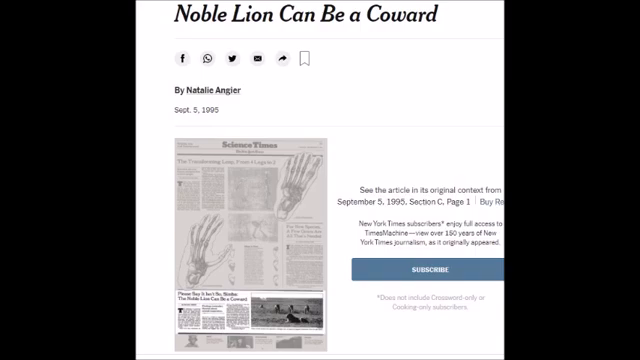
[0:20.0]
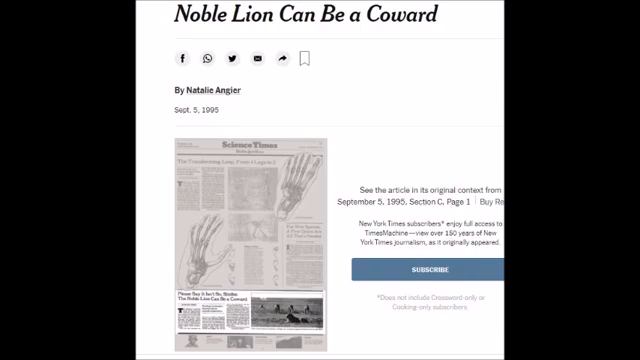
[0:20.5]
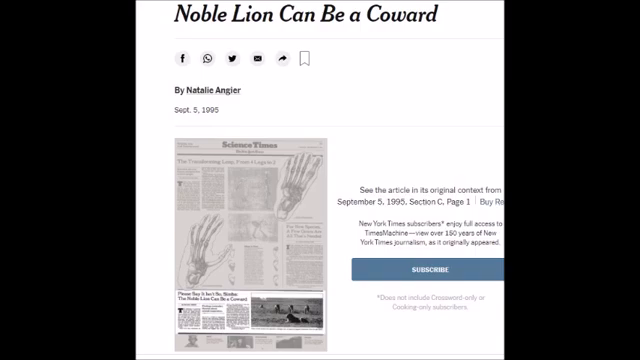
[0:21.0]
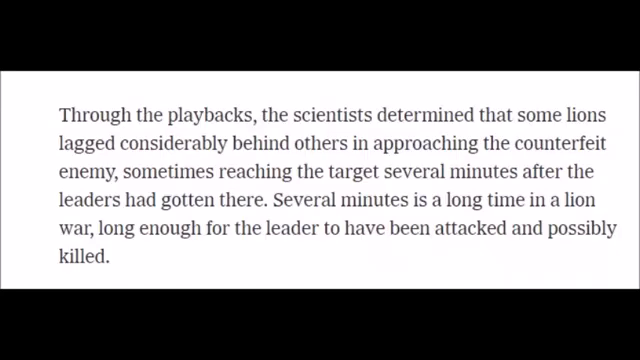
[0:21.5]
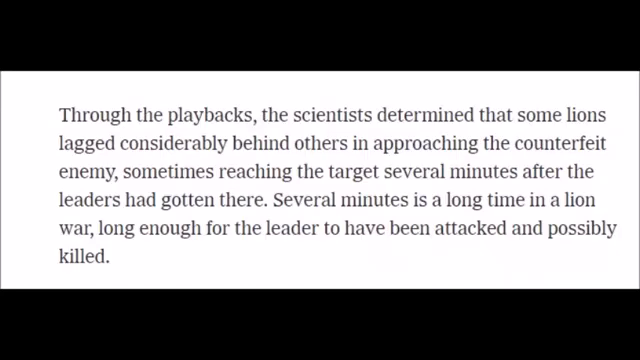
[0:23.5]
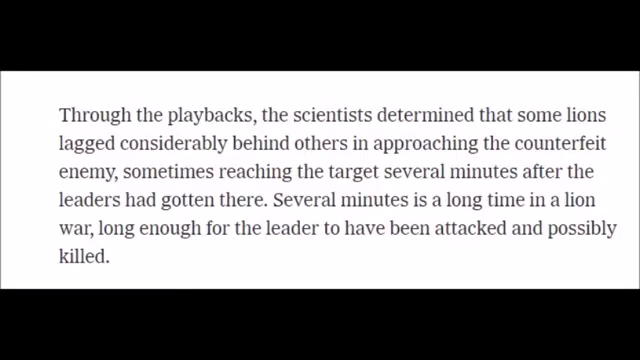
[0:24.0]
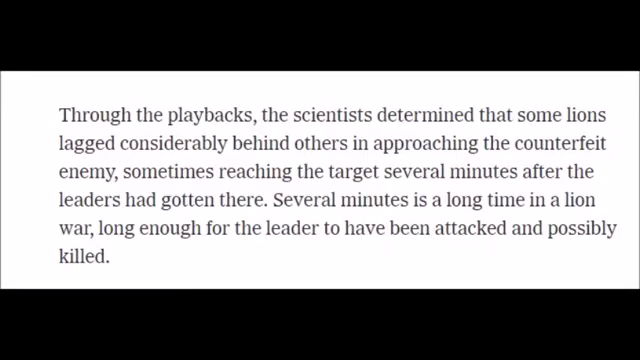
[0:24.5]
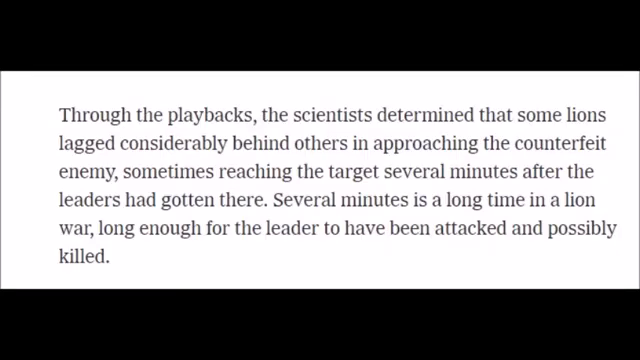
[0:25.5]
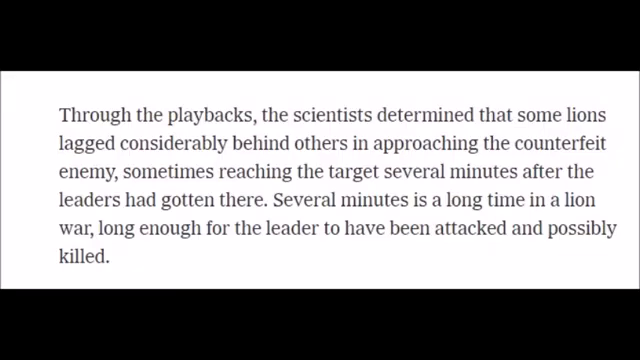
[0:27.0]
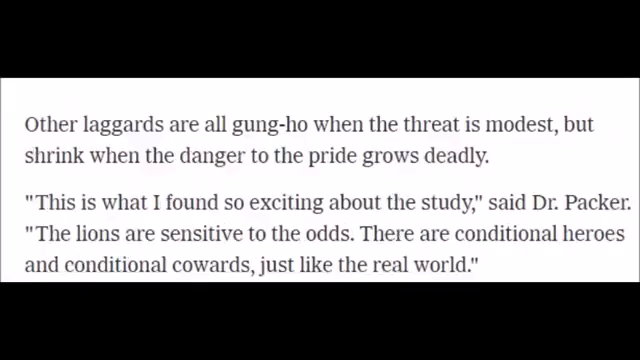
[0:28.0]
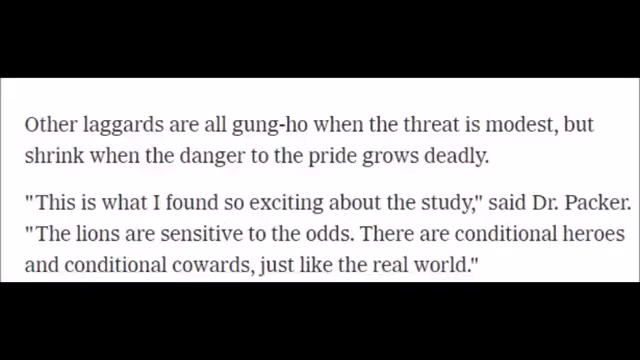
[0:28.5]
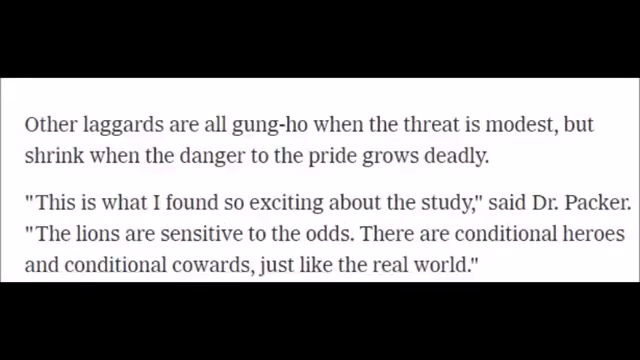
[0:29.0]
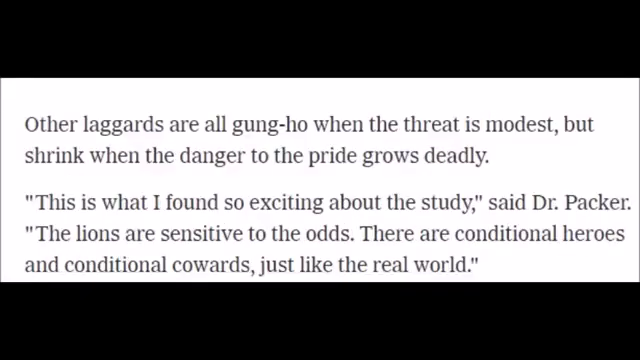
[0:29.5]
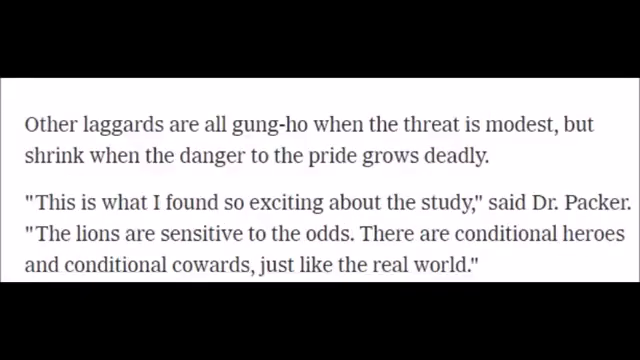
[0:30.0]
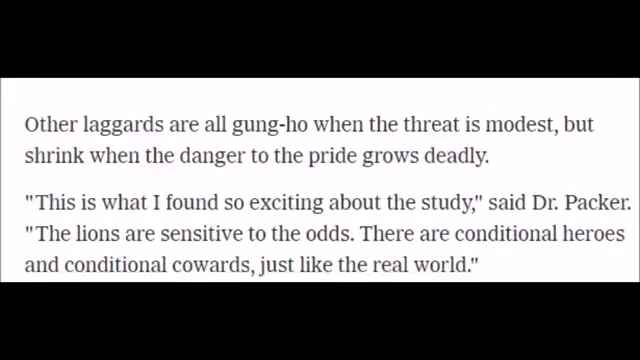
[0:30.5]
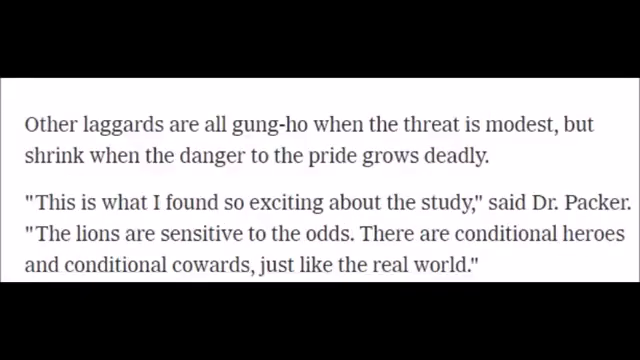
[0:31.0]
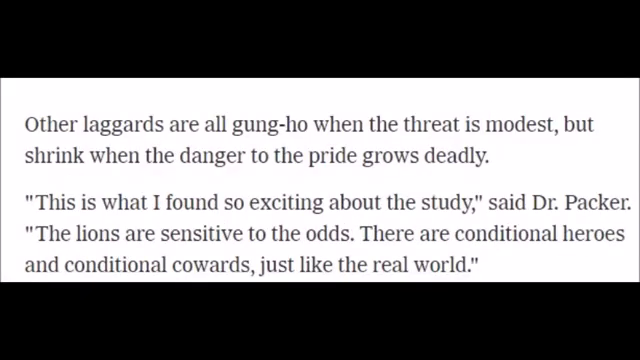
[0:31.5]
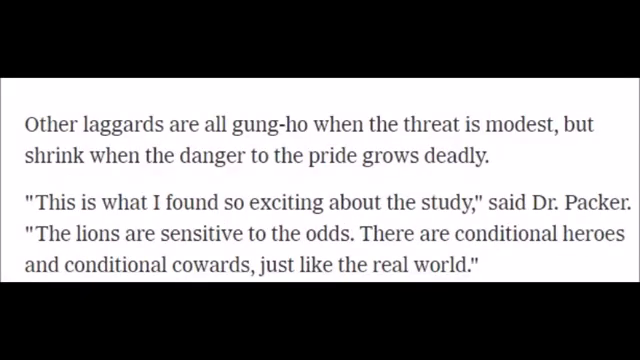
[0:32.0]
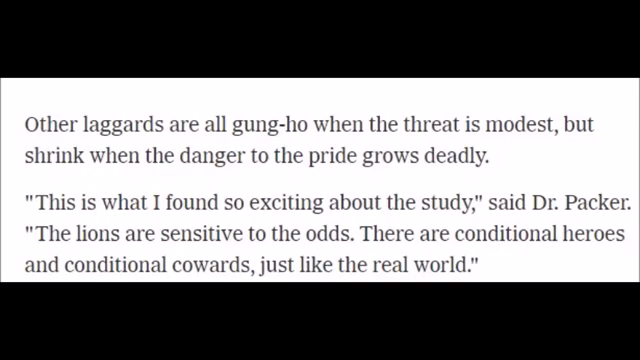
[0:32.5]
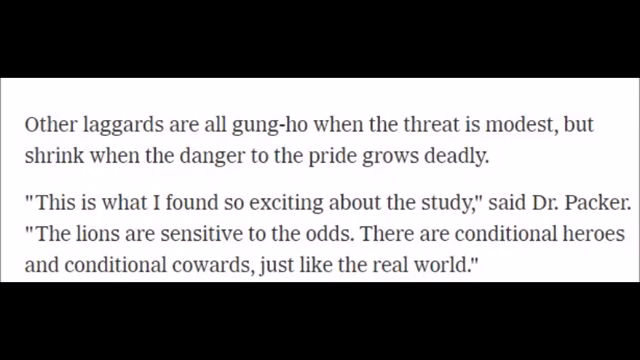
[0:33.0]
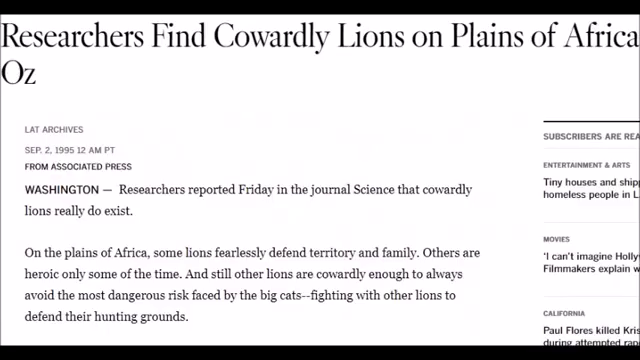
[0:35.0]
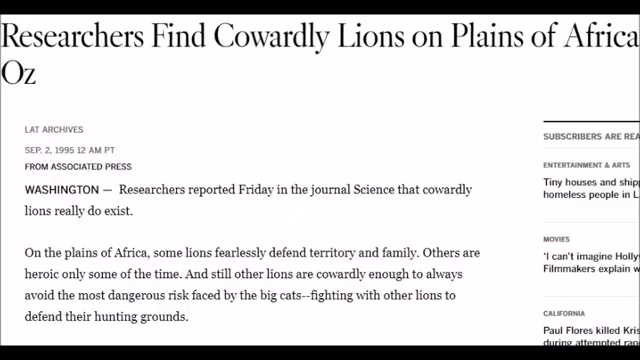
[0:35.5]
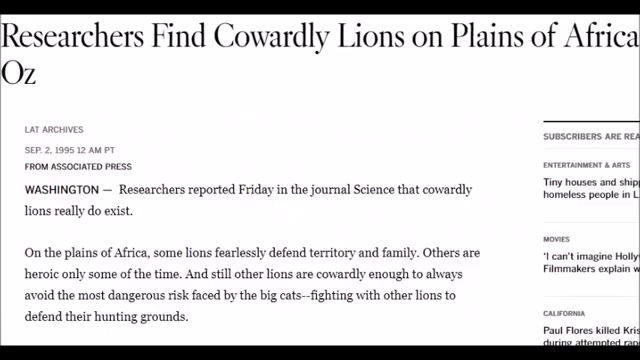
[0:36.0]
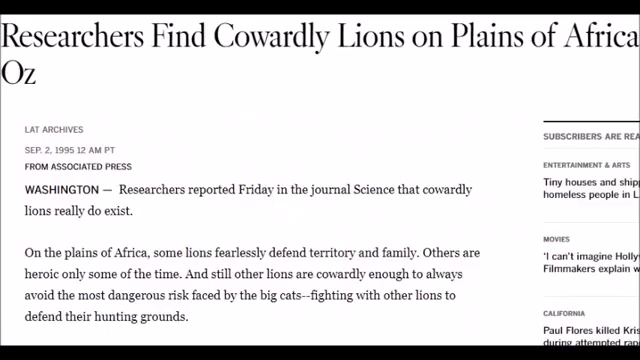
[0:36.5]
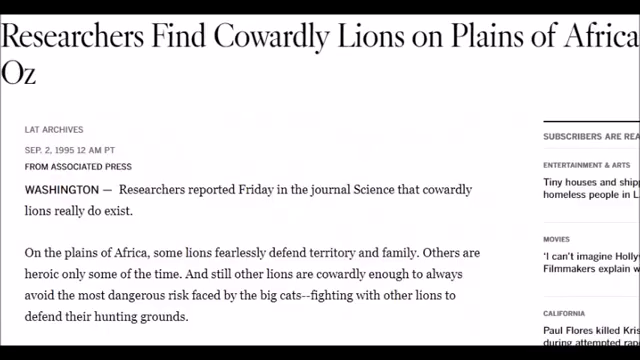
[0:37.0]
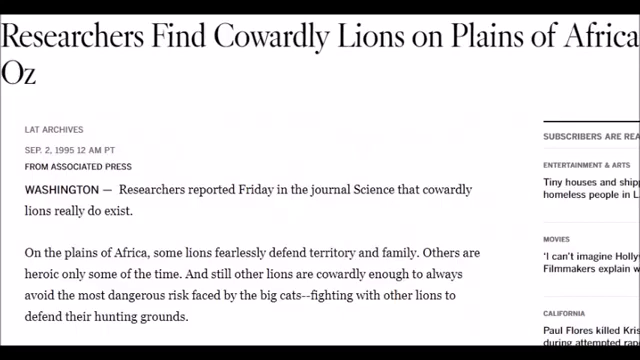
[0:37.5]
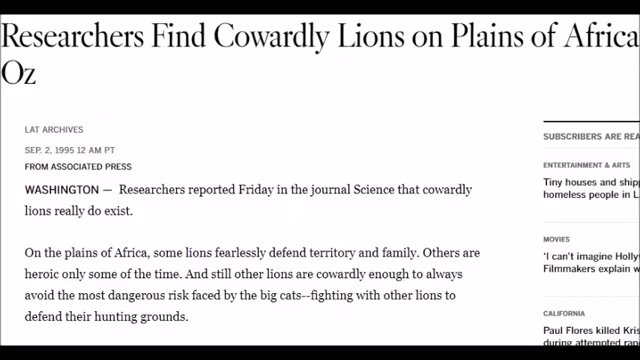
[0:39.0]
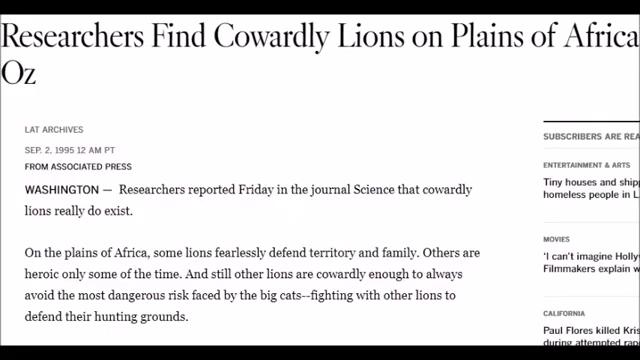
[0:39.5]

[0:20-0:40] An article published online titled "Noble lion can be a coward" appears, along with an article from the Science Times. An extract from the article reads: "Through the playbacks, the scientists determined that some lions lagged considerably behind others in approaching the counterfeit enemy, sometimes reaching the target several minutes after the leaders had gotten there. Several minutes is a long time in a lion war. Long enough for the leader to have been attacked and possibly killed." Another extract reads: "Other laggards are all gung-ho when the threat is modest, but shrink when the danger to the pride grows deadly. This is what I found so exciting about the study, said Dr. Packer. The lions are sensitive to the odds. They are conditional heroes and conditional cowards, just like the real world." A third article follows, titled "Researchers find cowardly lions on Plains of Africa Oz," with a passage reading: "On the Plains of Africa, some lions fearlessly defend territory and family. Others are heroic only some of the time. And still other lions are cowardly enough to always avoid the most dangerous risk faced by the big cats, fighting with other lions to defend their hunting grounds."